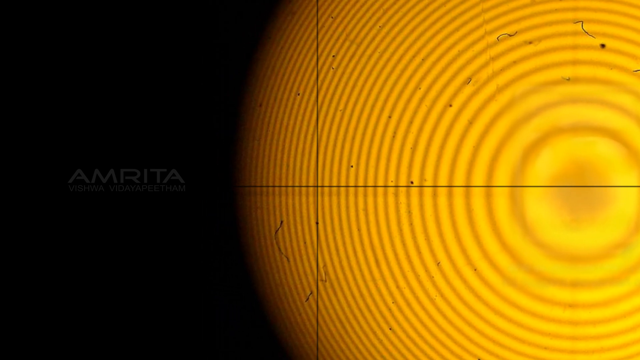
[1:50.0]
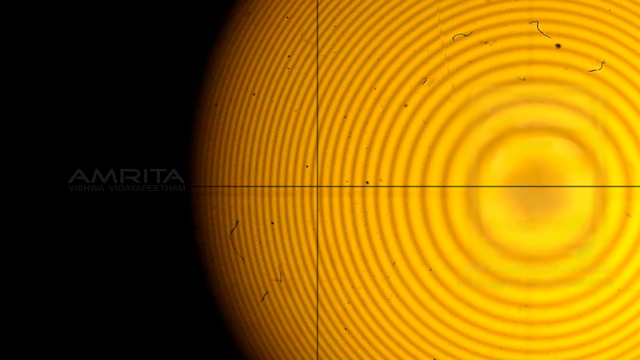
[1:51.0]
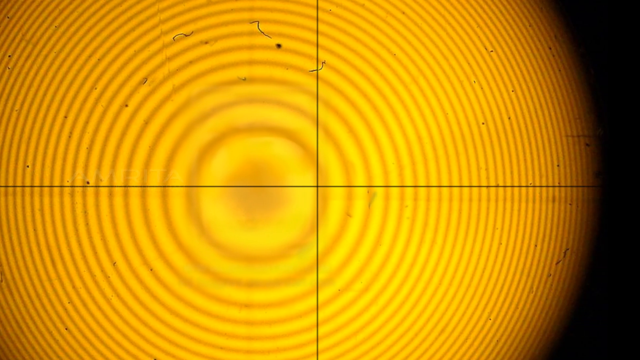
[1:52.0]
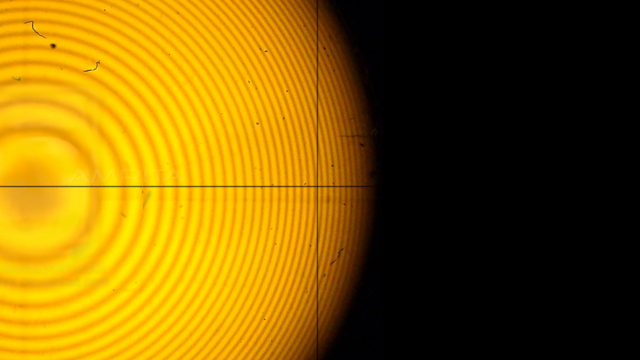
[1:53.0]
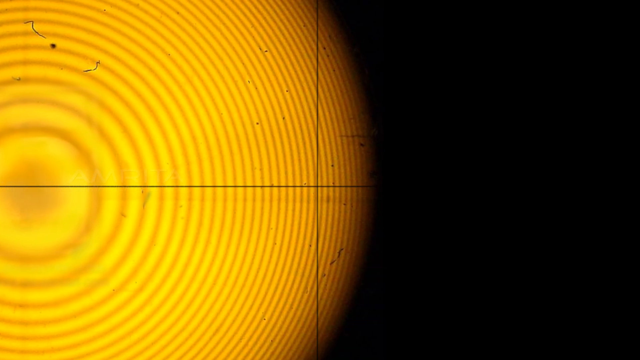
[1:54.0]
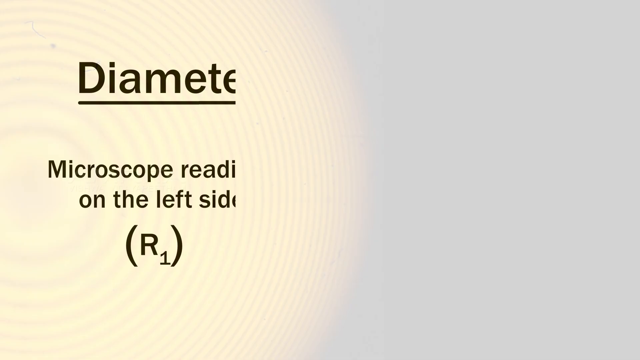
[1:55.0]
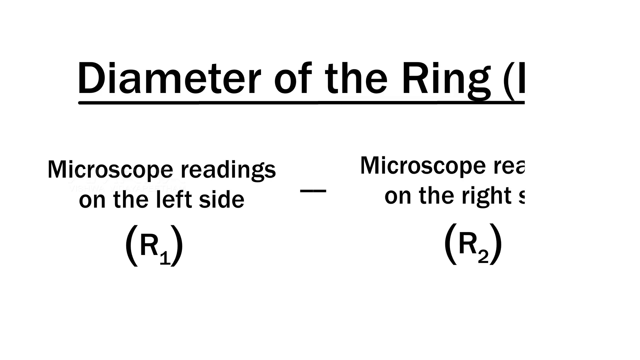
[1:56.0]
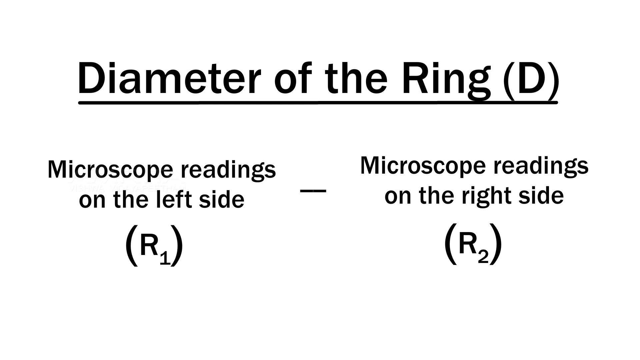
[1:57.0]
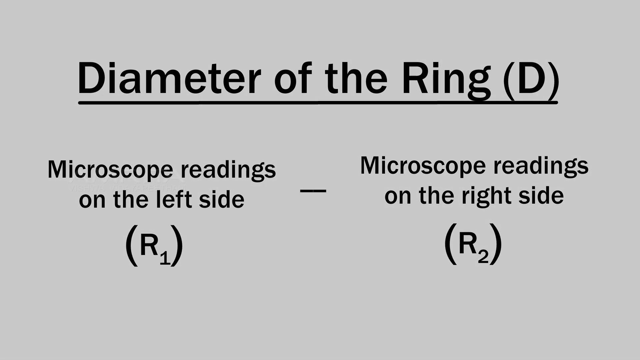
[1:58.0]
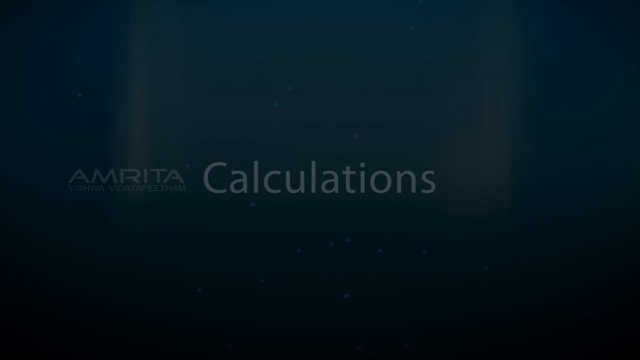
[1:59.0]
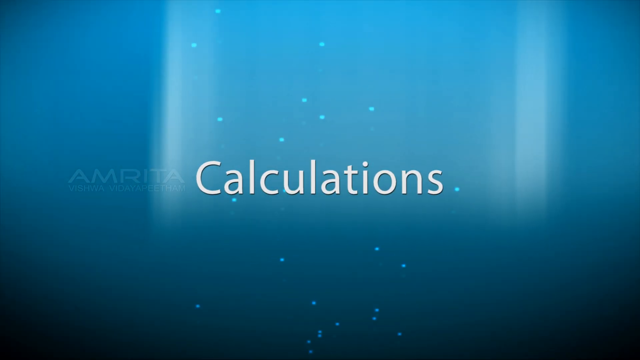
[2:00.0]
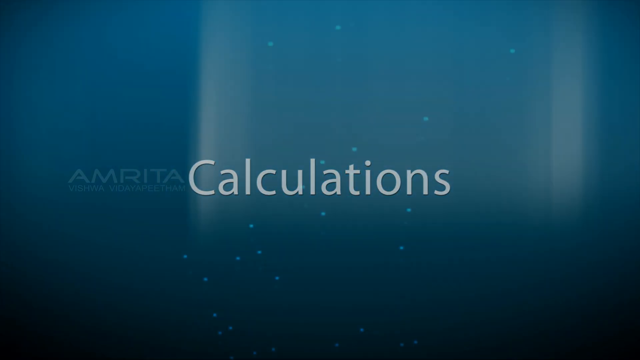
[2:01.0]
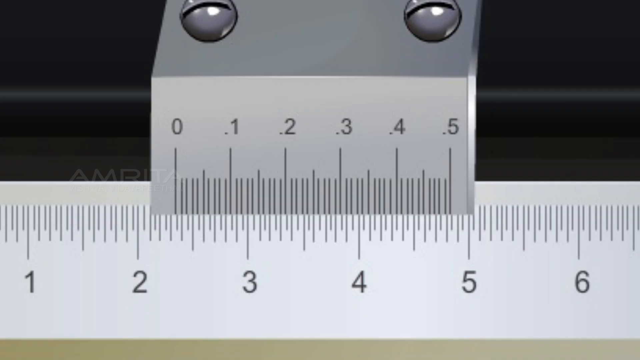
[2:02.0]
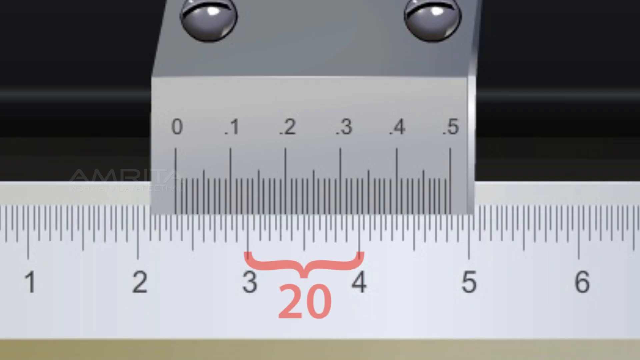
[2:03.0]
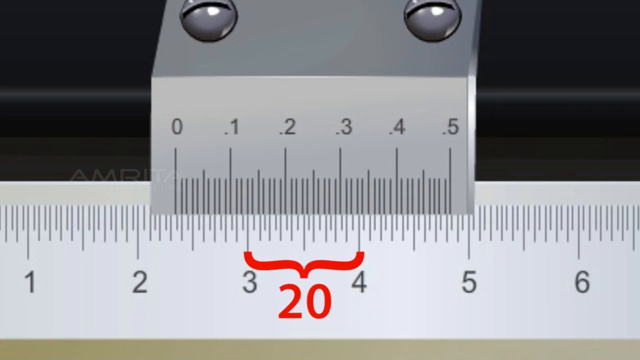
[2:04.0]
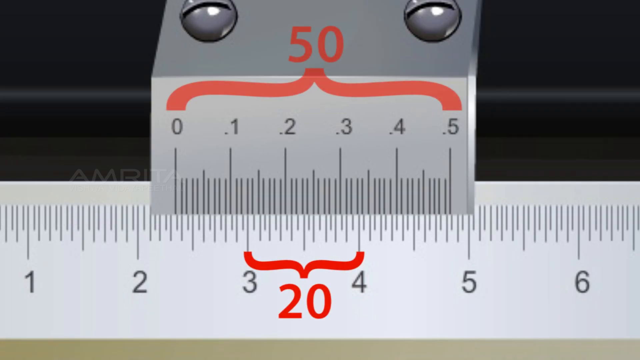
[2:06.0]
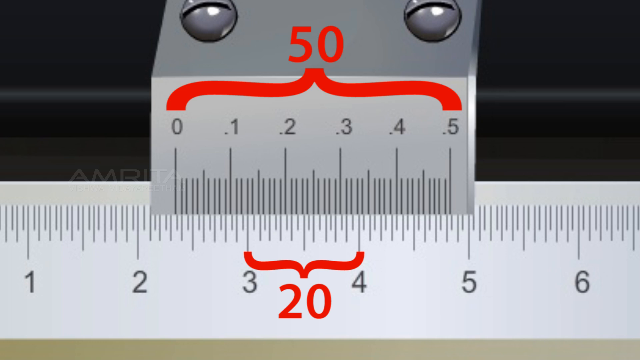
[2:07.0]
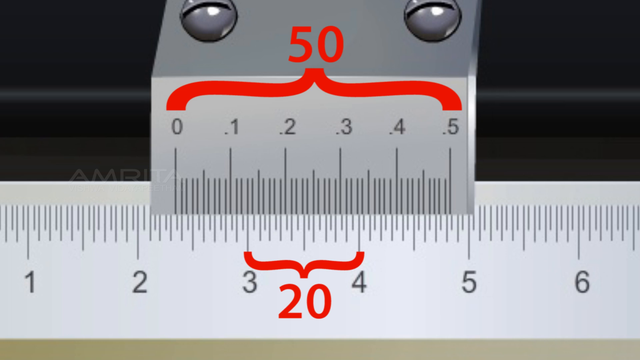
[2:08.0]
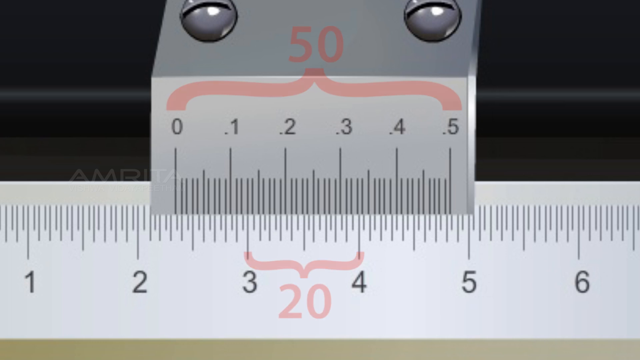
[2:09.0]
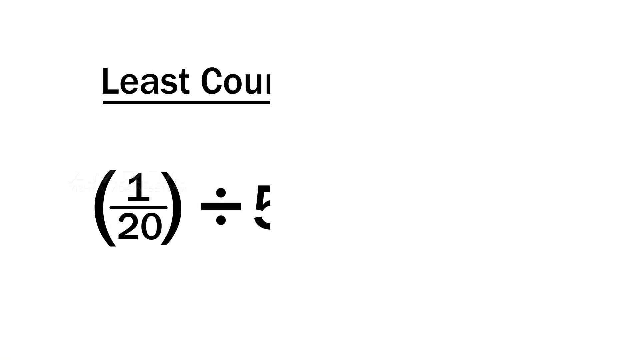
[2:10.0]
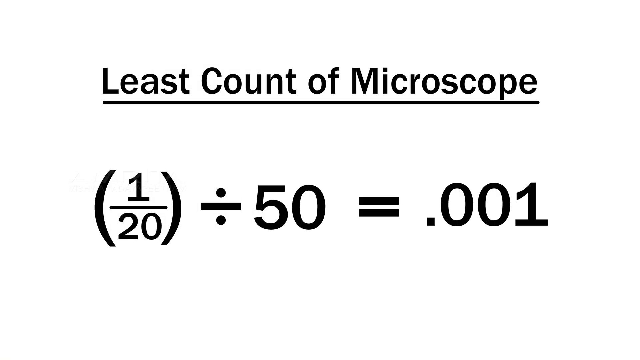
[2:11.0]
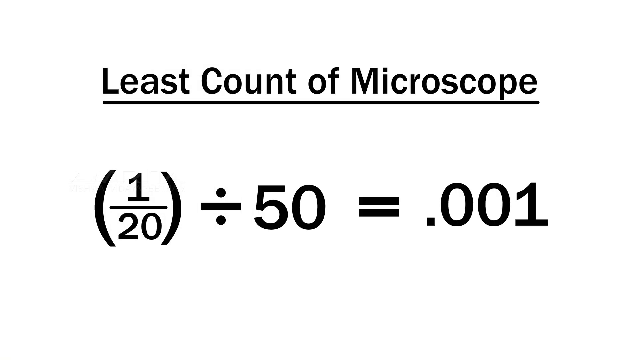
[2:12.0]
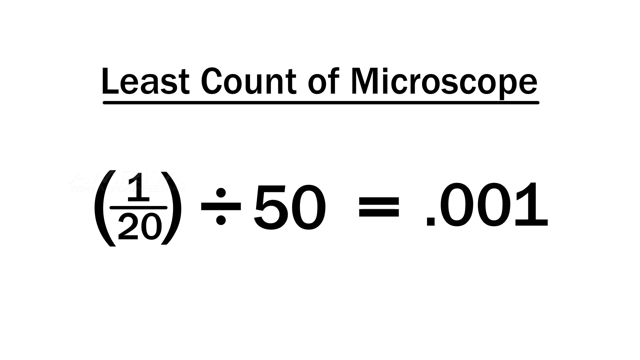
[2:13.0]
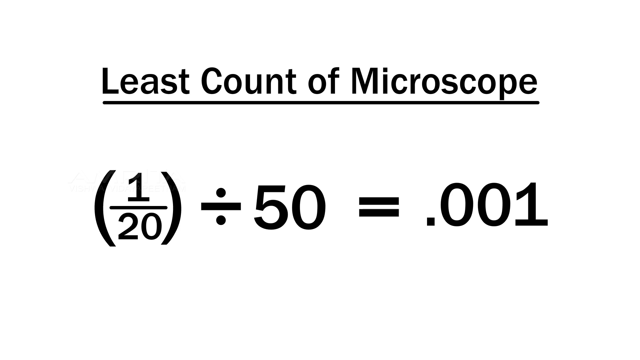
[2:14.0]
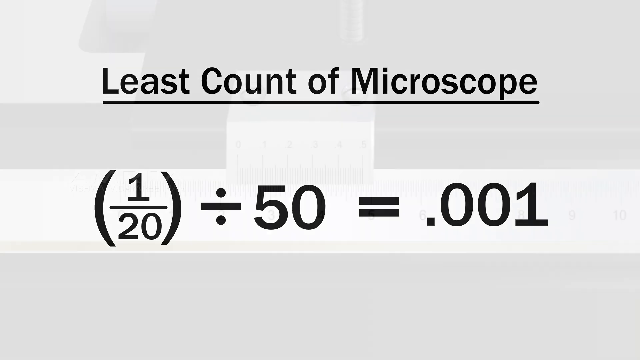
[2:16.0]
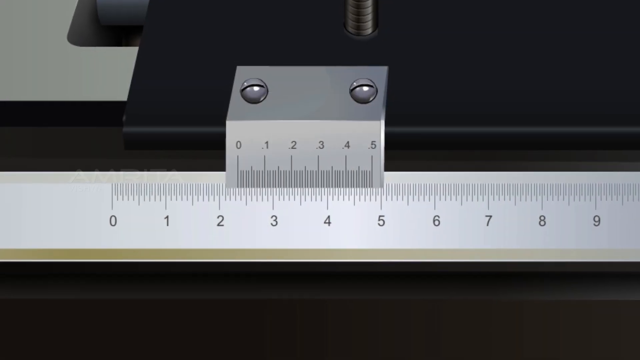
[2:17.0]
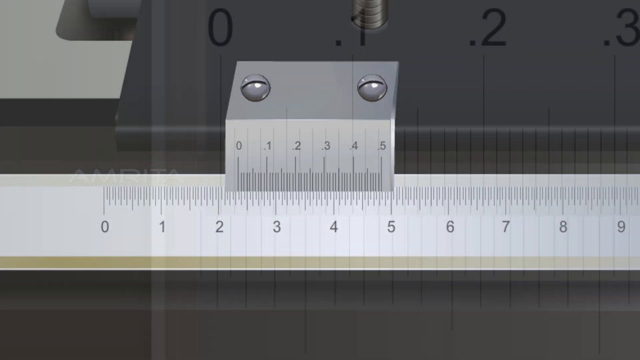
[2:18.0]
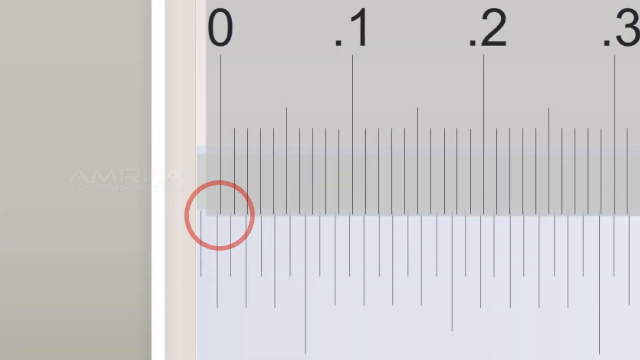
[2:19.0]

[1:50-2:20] On a black backdrop is a large yellow circular shape that looks computer-generated, taking up more than half of the frame. The camera pans so that the yellow circle moves from right to left, pauses, and then the whole image fades away. Next is a white background with large black lettering reading "diameter of the", underlined, with more words beneath that look like a formula. Then comes a blue backdrop with white bubbles rising from below and the word "calculations" in the middle. After that, a white ruler appears, marked 1, 2, 3, 4, 5, 6 with small tick marks, and above it is another ruler measuring on a smaller scale, 0 to 5.